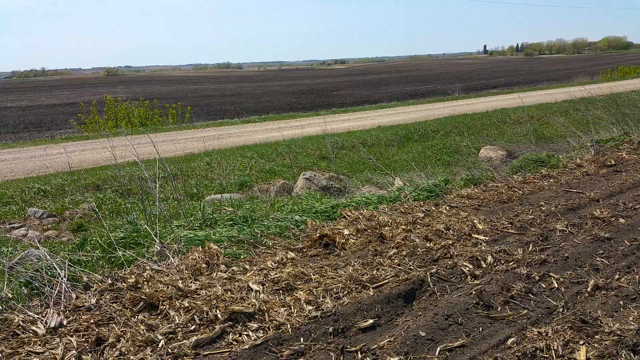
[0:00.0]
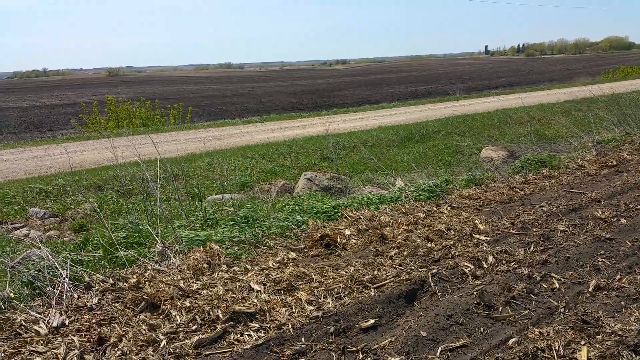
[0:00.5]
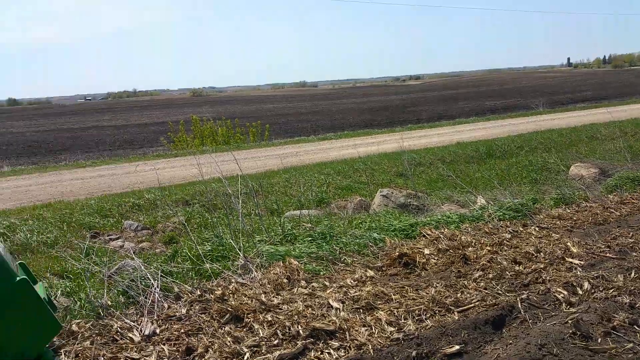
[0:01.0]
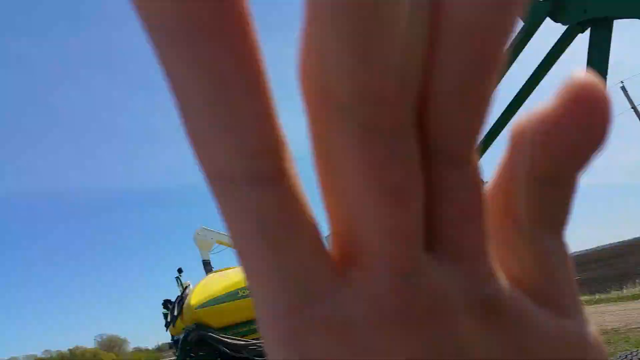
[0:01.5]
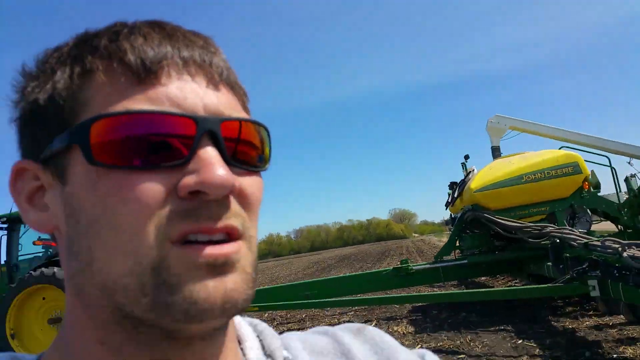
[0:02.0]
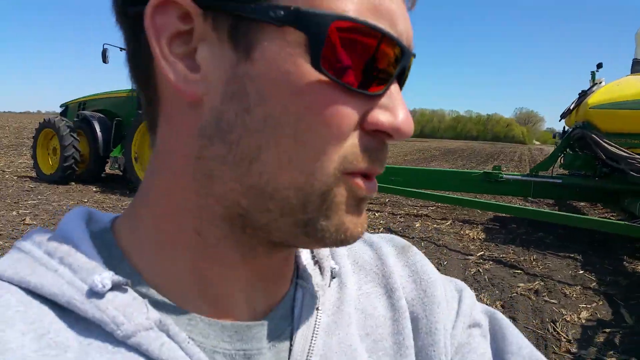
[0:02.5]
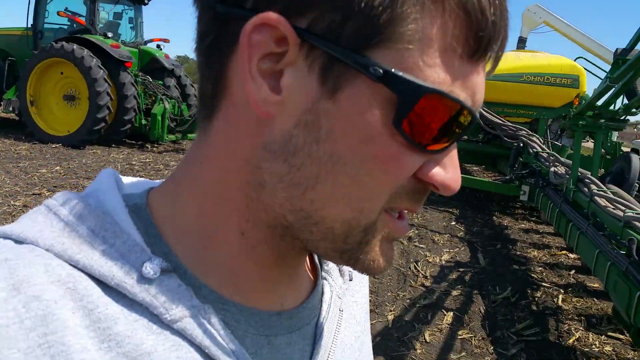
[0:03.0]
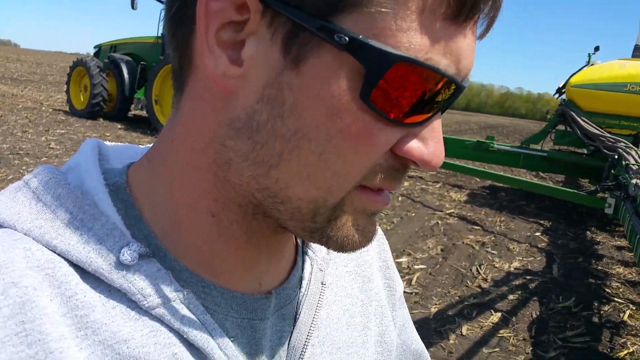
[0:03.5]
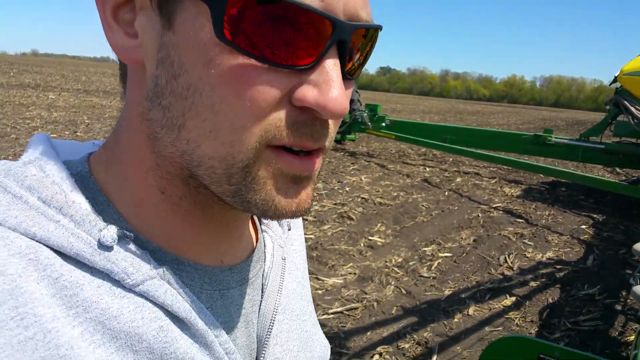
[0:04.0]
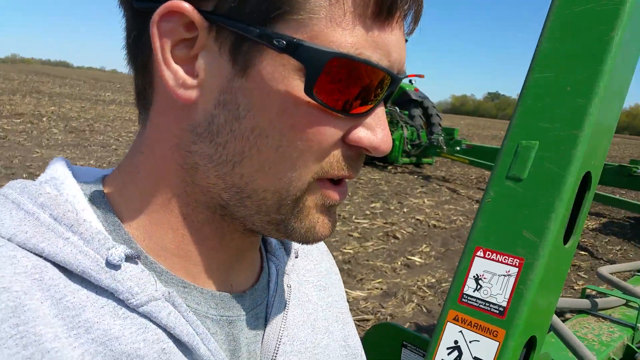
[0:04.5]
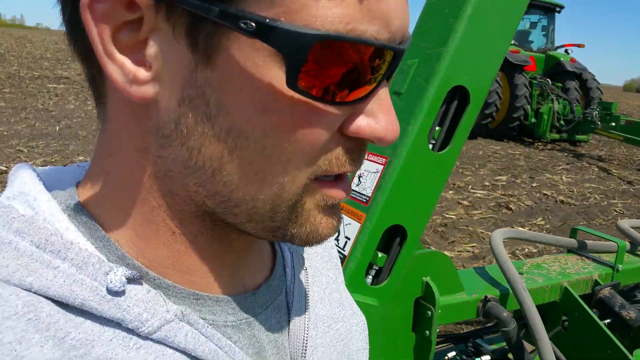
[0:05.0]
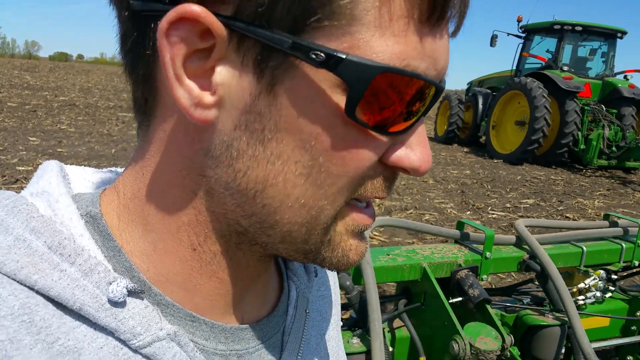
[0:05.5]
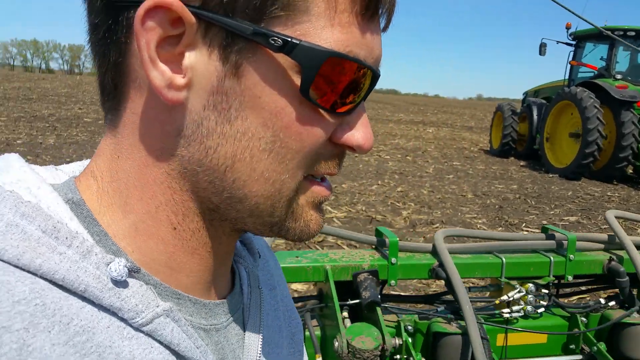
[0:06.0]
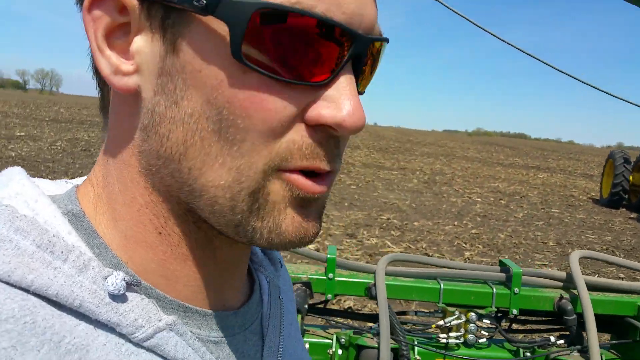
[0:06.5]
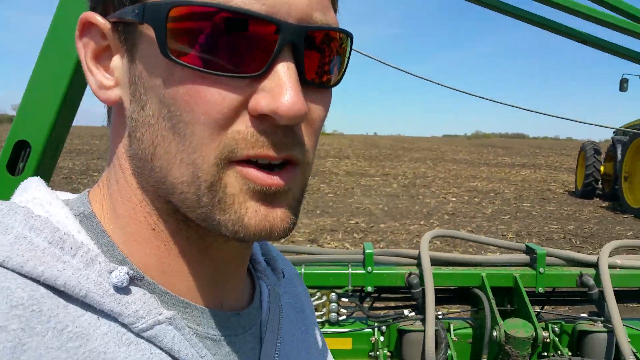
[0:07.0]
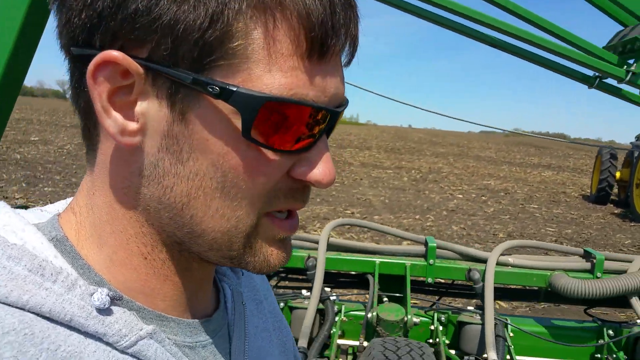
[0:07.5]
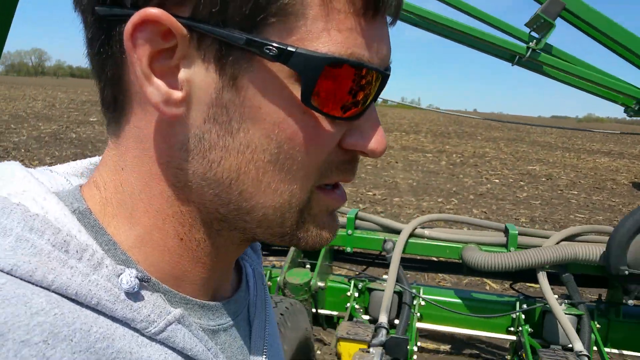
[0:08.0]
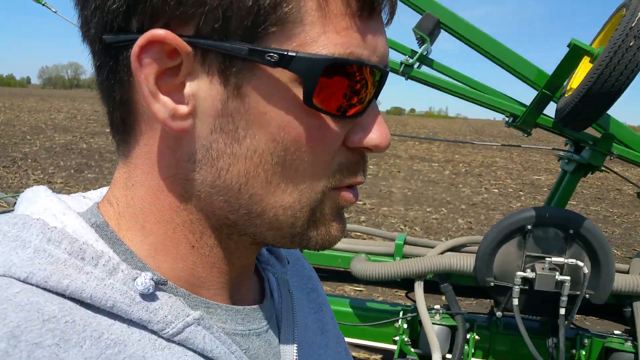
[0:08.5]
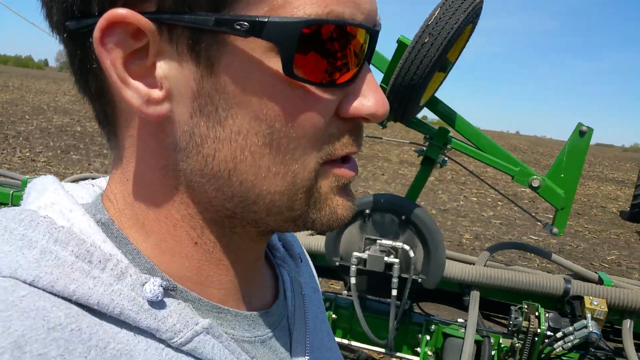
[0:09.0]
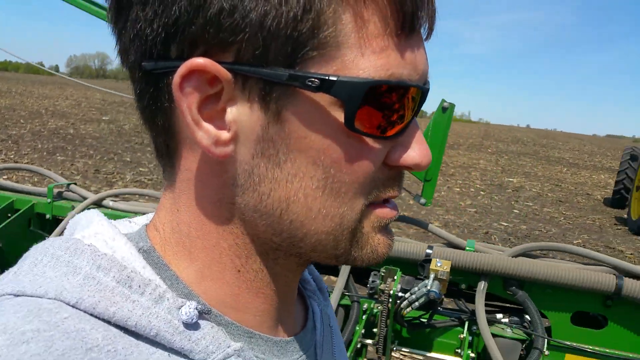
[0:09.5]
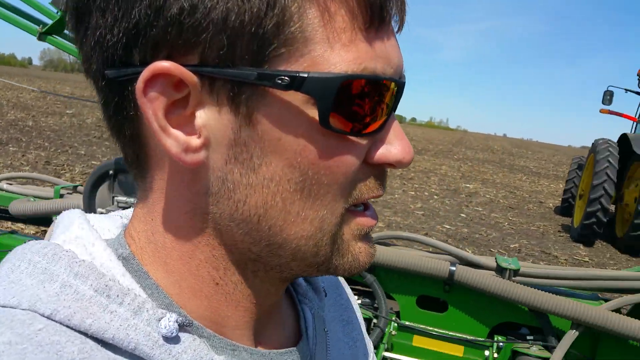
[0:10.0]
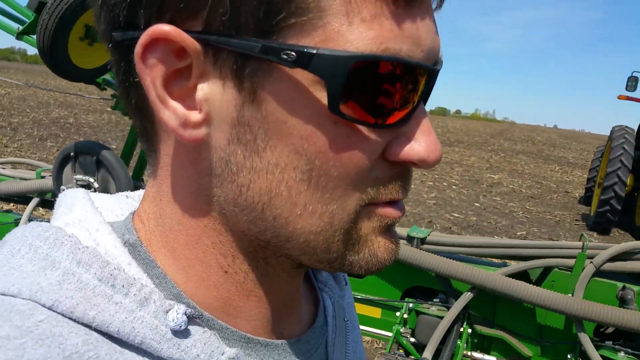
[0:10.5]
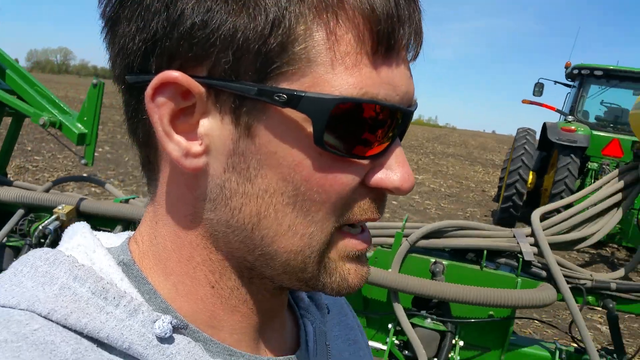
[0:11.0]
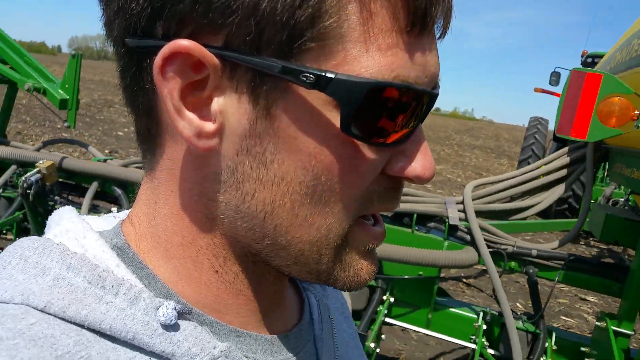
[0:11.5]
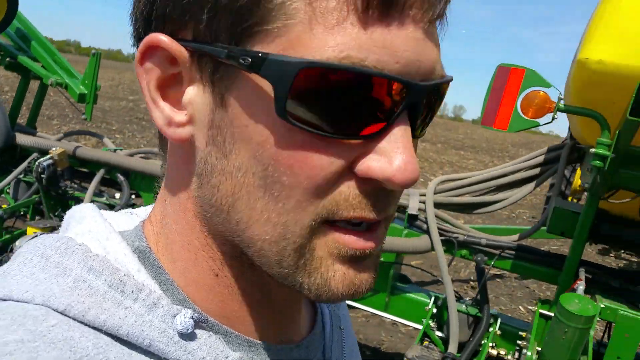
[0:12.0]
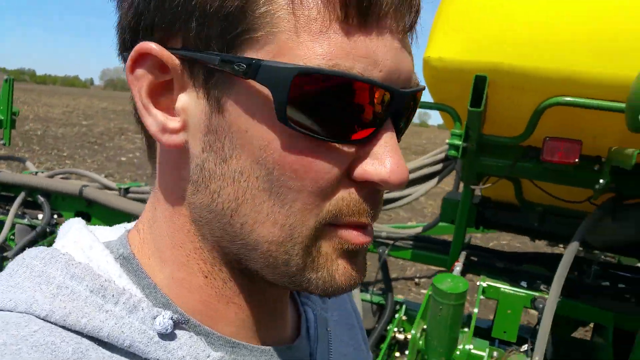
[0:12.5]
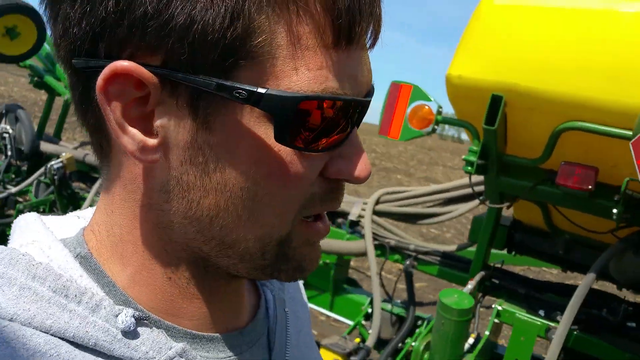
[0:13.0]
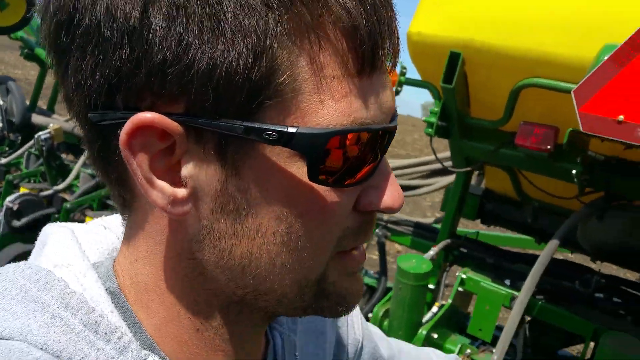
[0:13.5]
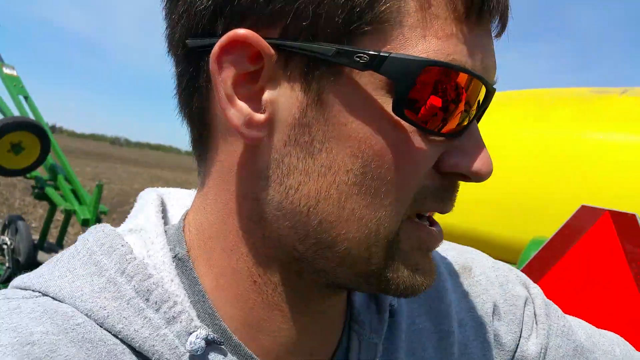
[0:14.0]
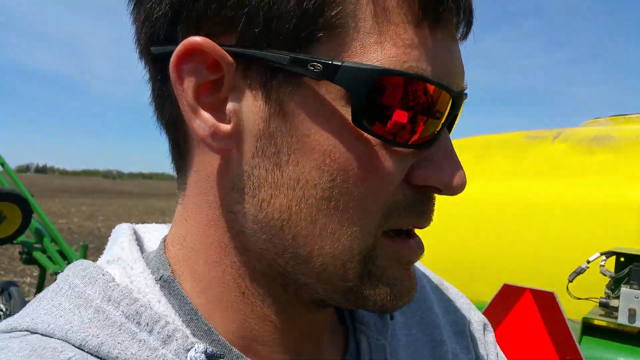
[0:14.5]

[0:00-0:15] A man holds up his camera and talks to it. He appears to be Caucasian and wears sunglasses tinted red and orange. He talks to the camera while walking in a big field next to some large agricultural machines, which are yellow and green with a lot of intricate parts. The camera is somewhat shaky since there is no stabilization. He seems to be the only person in the field so far; no other people are visible.